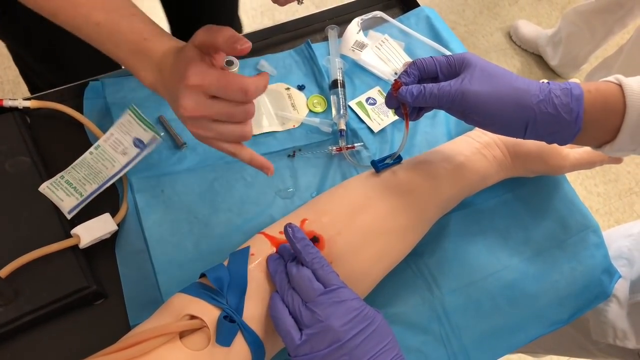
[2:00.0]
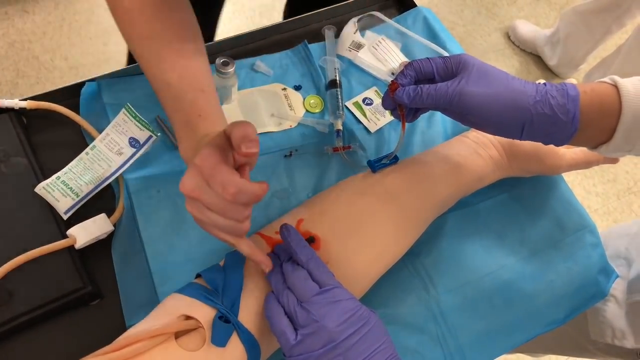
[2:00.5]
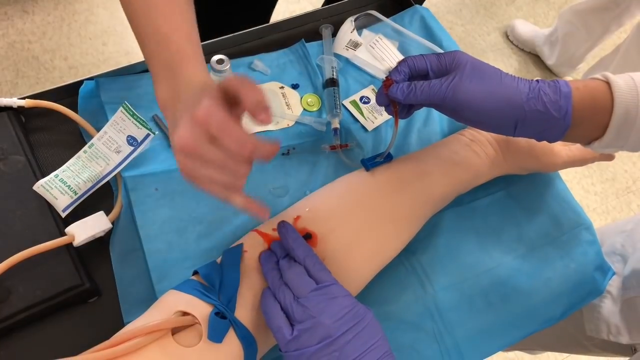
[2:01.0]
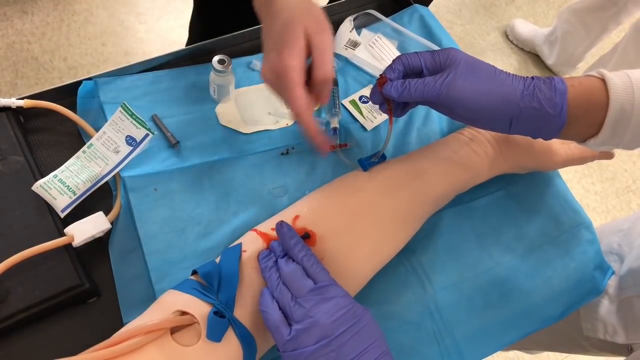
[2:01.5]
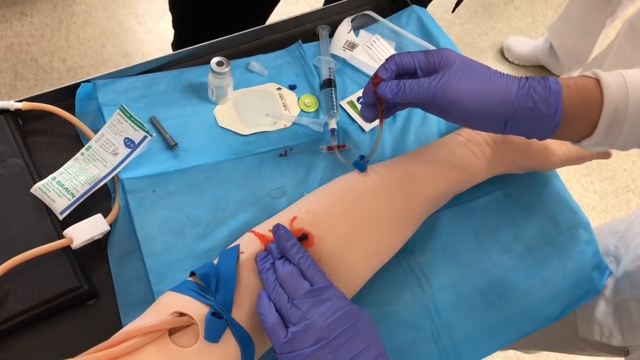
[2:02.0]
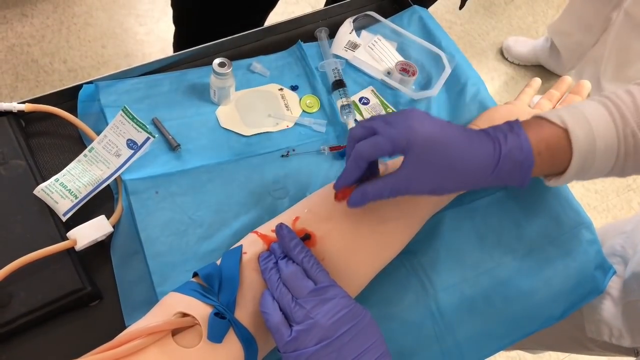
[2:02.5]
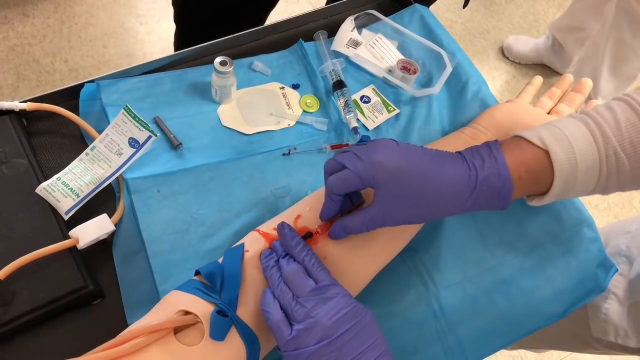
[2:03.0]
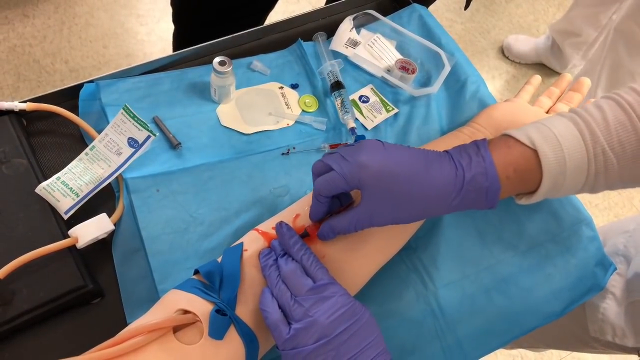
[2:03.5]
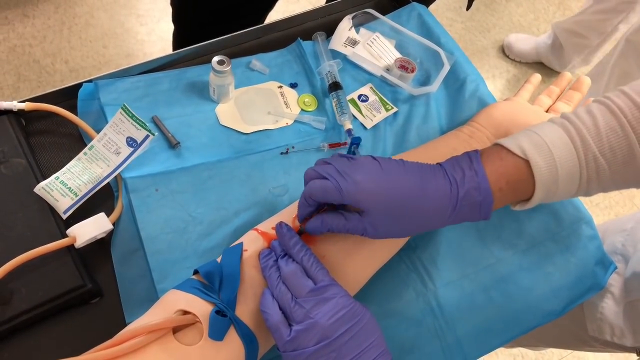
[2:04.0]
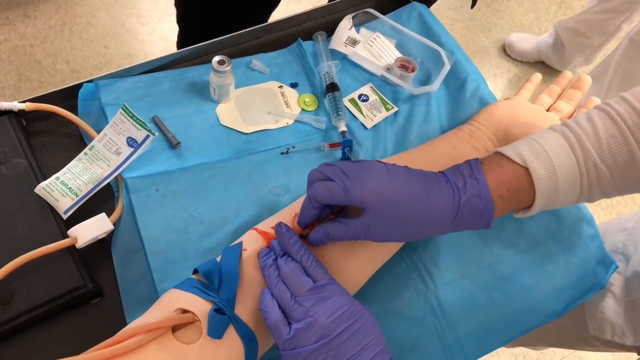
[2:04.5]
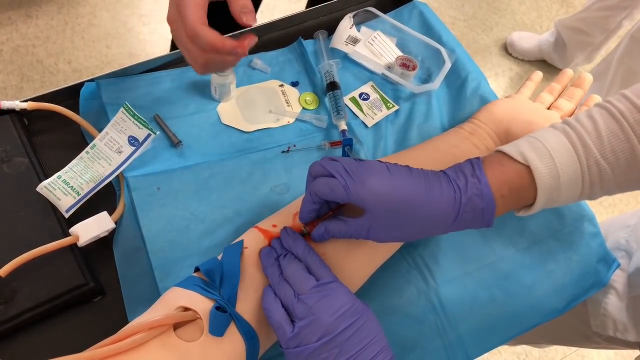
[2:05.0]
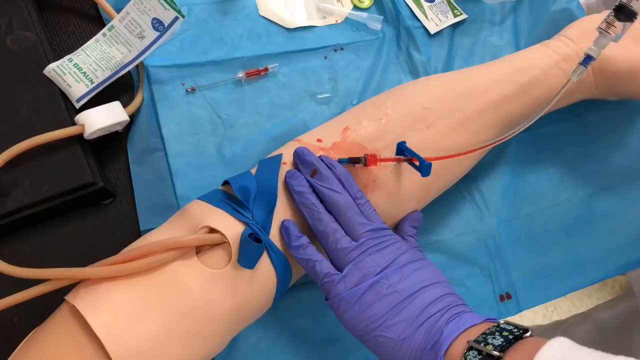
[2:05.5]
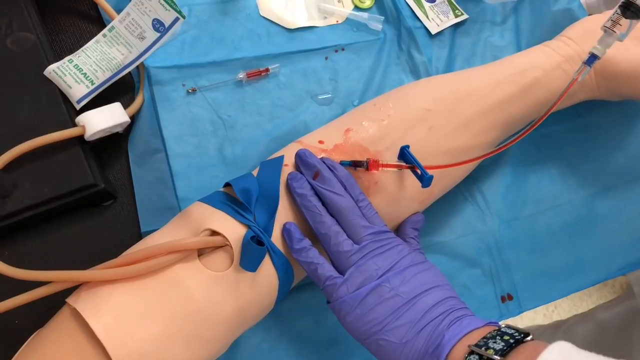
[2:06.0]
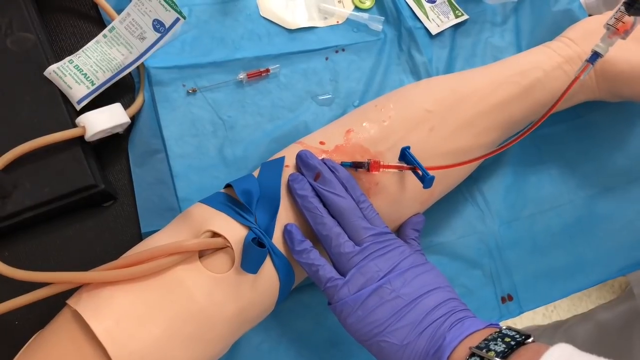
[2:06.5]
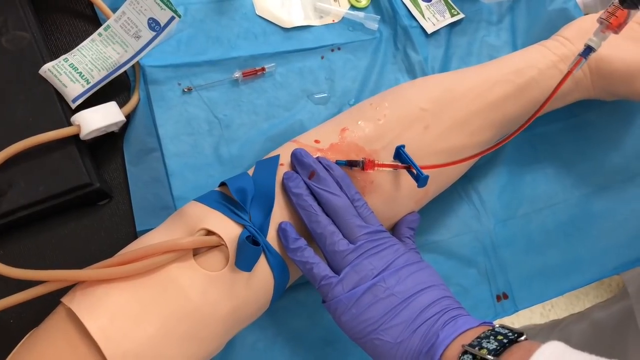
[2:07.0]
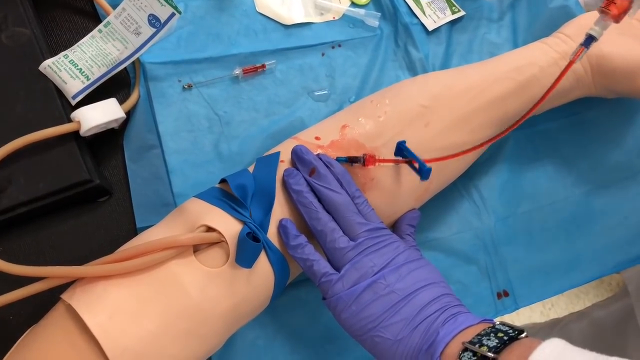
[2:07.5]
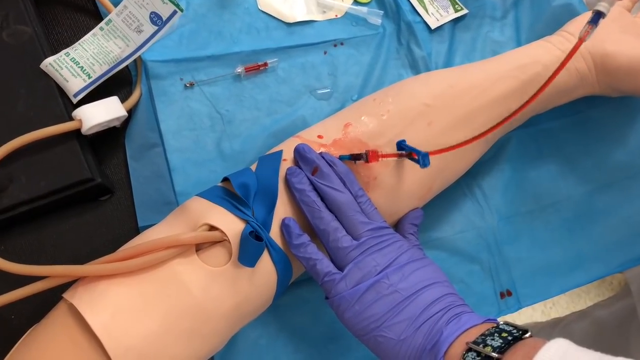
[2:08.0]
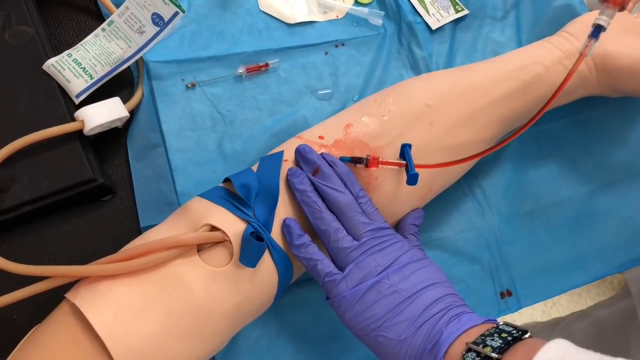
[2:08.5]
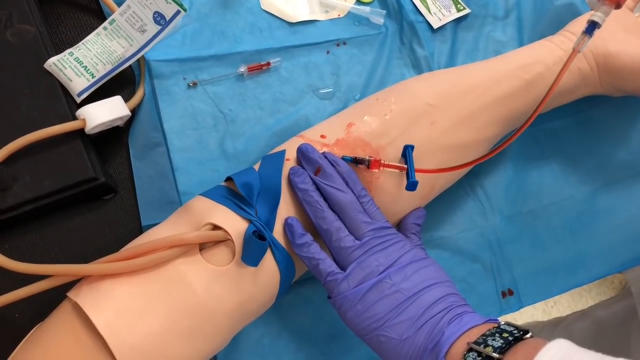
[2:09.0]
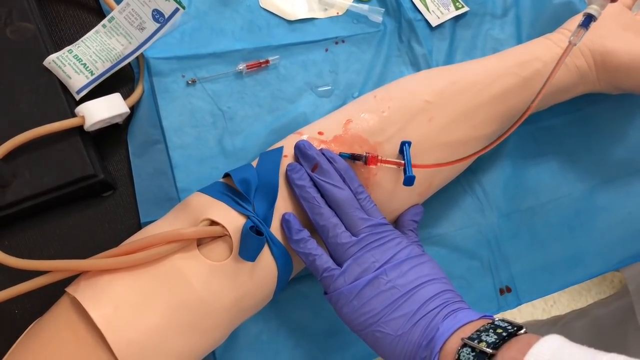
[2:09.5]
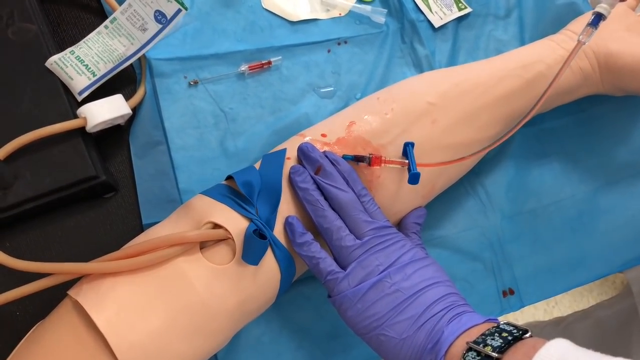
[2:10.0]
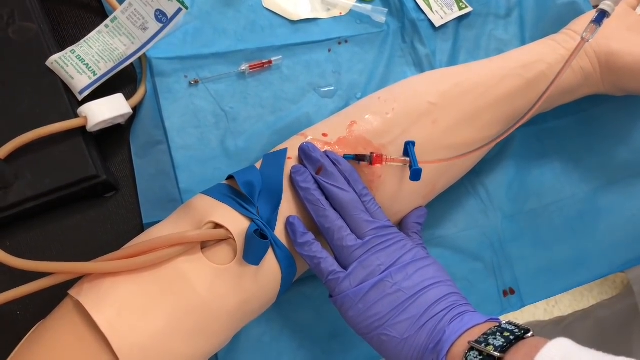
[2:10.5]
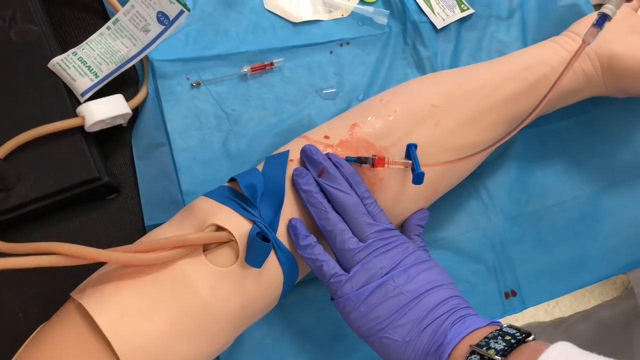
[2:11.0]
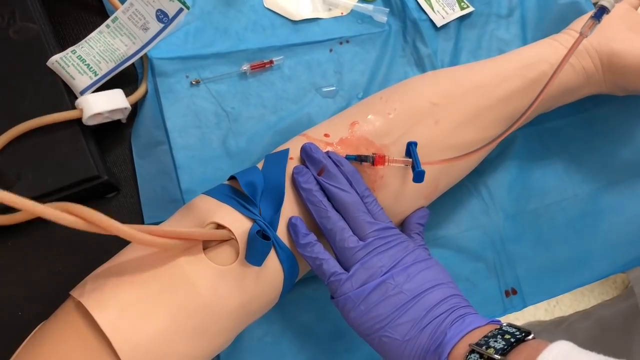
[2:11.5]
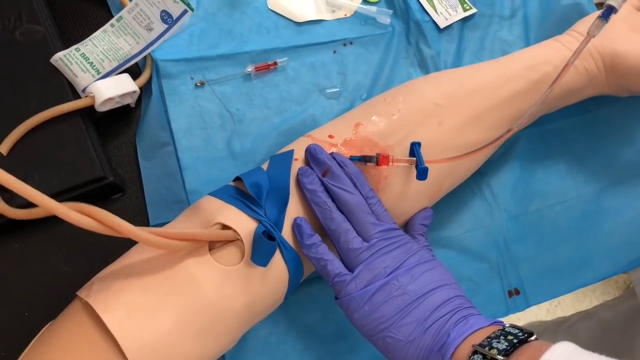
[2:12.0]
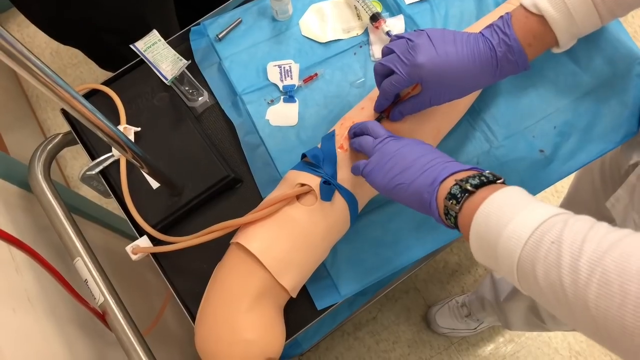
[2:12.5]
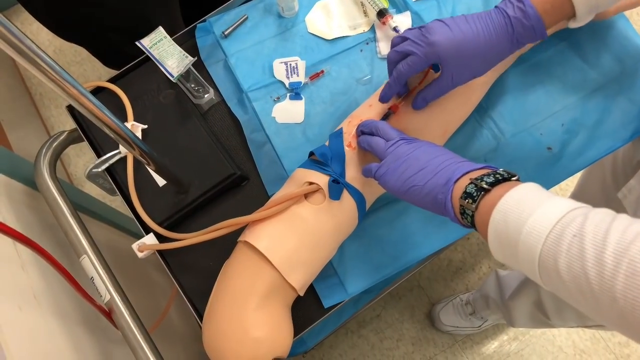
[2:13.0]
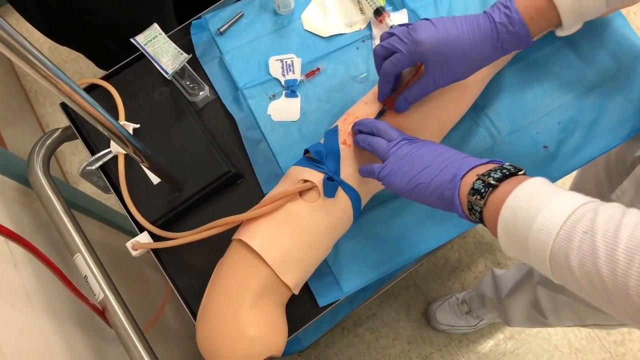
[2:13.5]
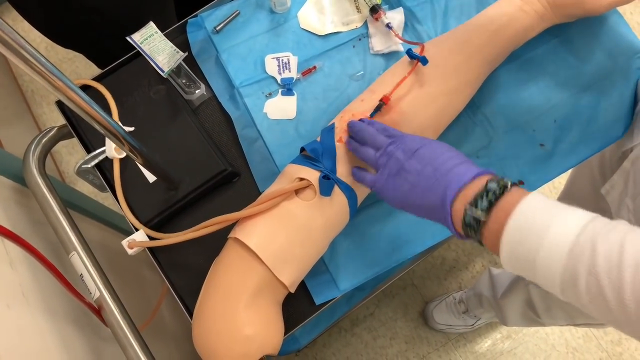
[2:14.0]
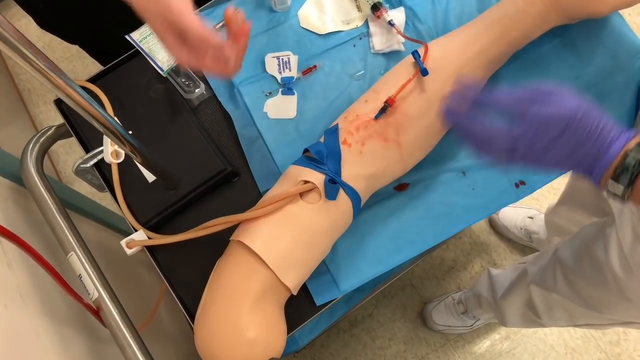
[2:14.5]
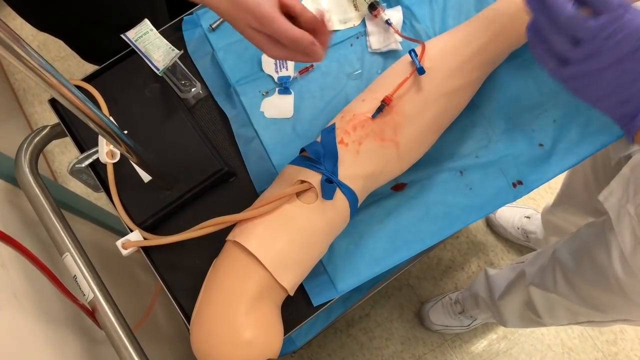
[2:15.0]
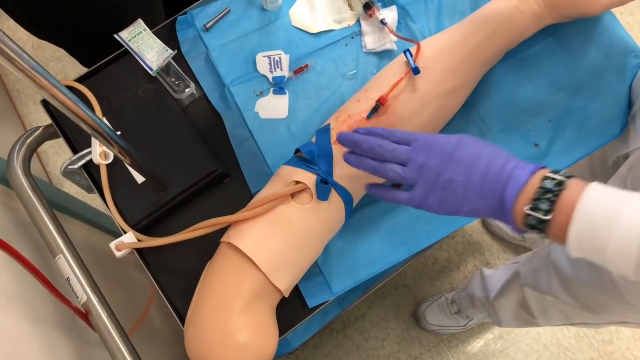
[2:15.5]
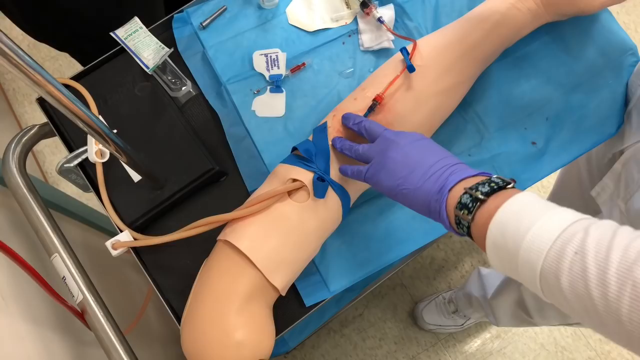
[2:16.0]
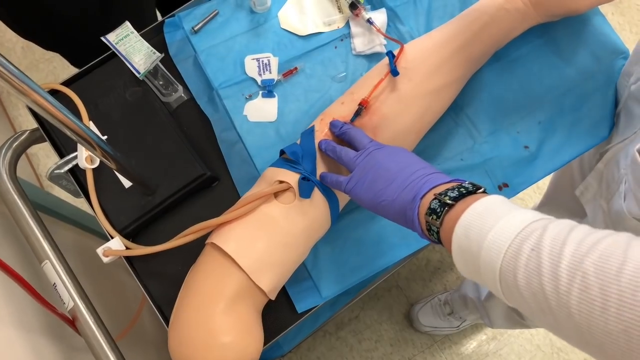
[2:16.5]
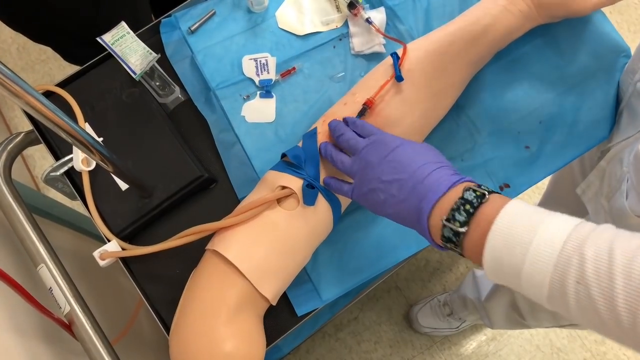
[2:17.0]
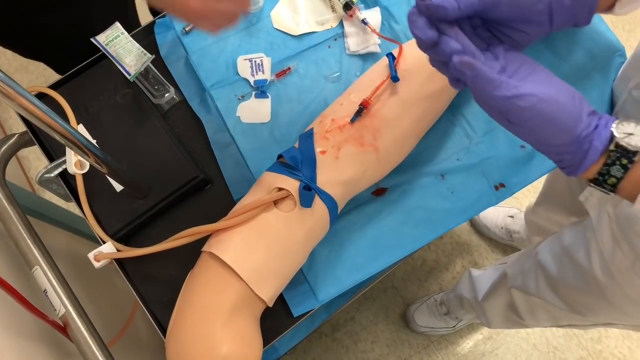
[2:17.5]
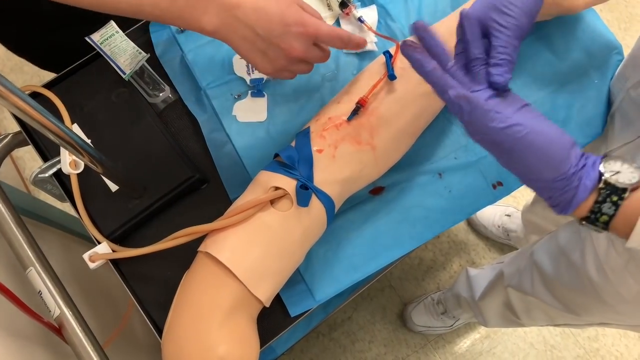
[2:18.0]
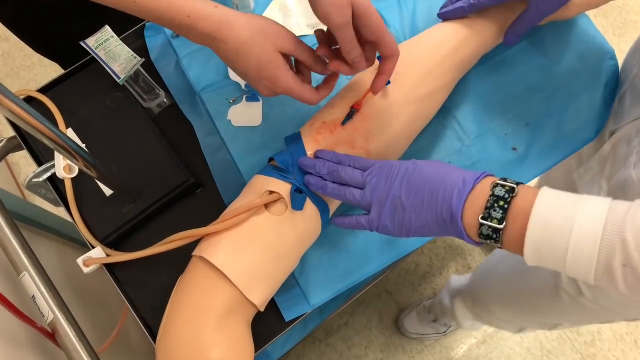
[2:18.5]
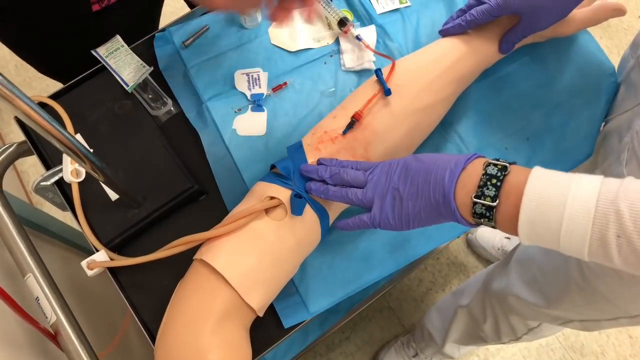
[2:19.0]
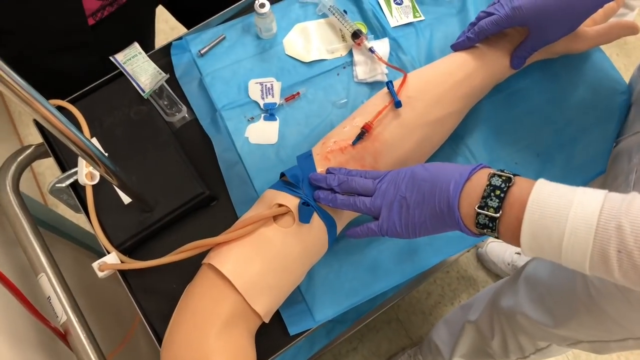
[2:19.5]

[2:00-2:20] An aerial view shows two people. One is dressed in white pants, white shoes and a white lab coat, with the head not visible, exposed skin only at the wrists, and purple latex gloves. The other wears black pants; only part of the legs and the bare hands are visible. Also in view are a black cart, a metal cart handle that appears to be some type of aluminum and is silver in color, and a blue medical mat, open and sprawled over the cart. A fake human arm goes from the wrist to the shoulder, and the hand is shown only in small bits in parts of the video. On top of the sprawled-out mat are medical supplies, such as a filled vial and what looks like a medical needle, but with a tube on the vial instead of a needle.